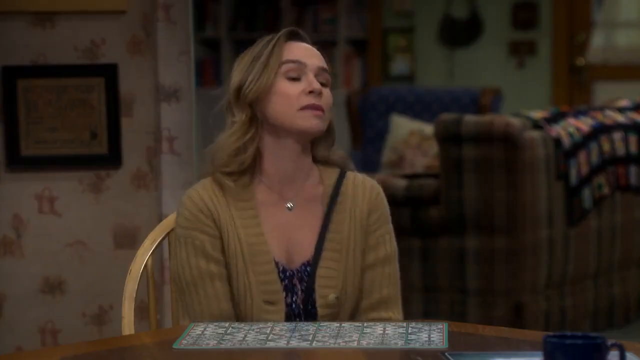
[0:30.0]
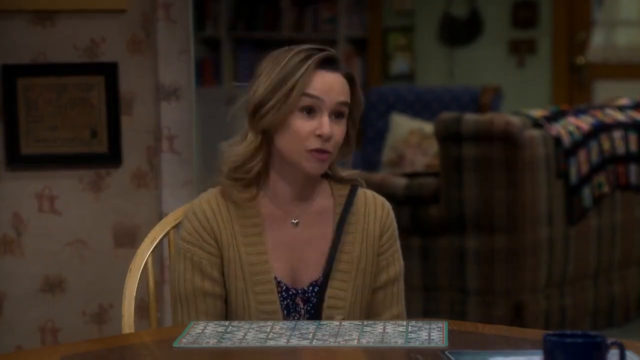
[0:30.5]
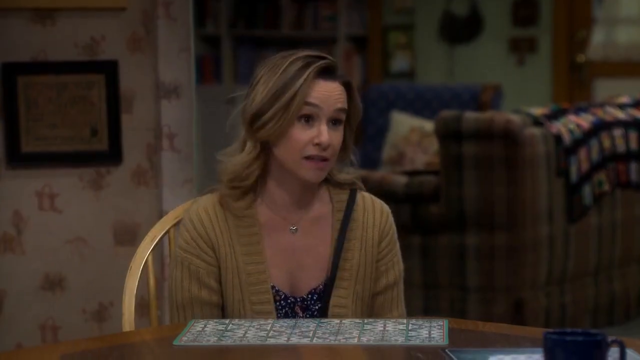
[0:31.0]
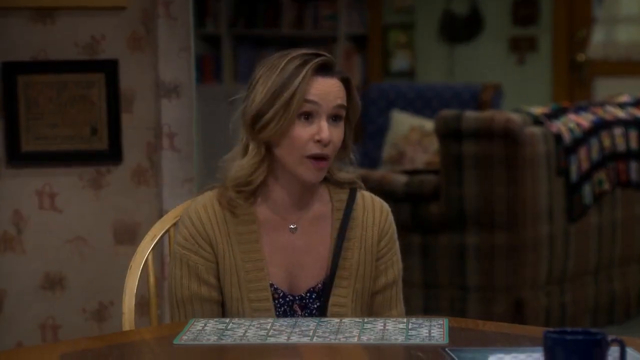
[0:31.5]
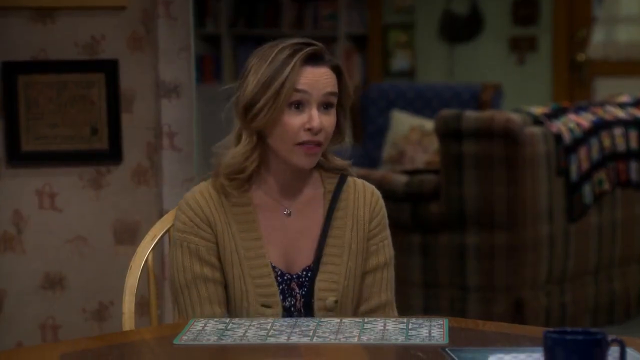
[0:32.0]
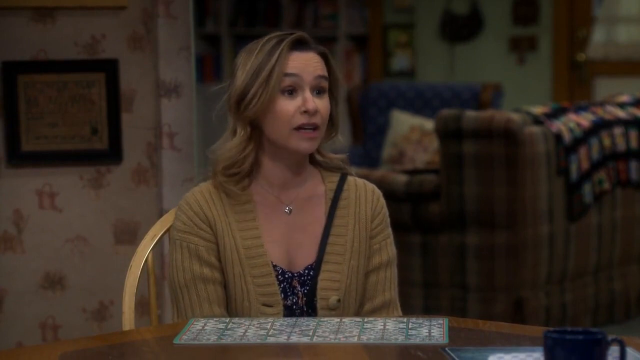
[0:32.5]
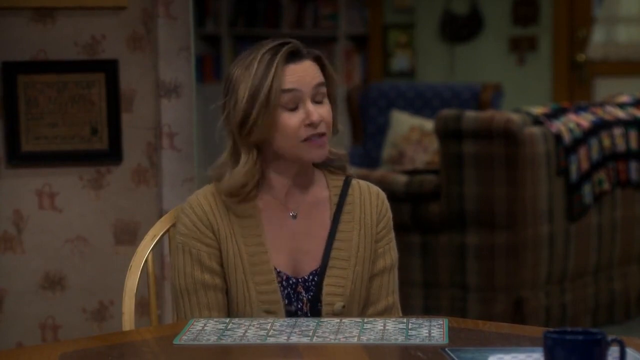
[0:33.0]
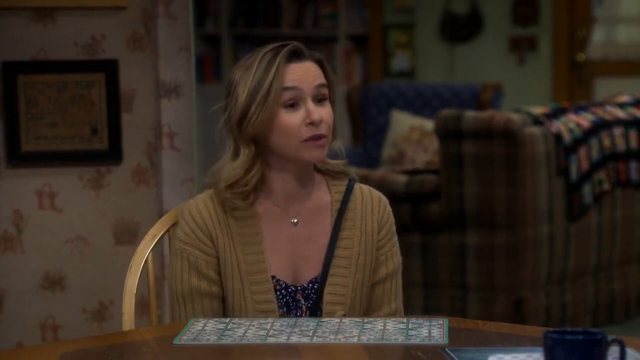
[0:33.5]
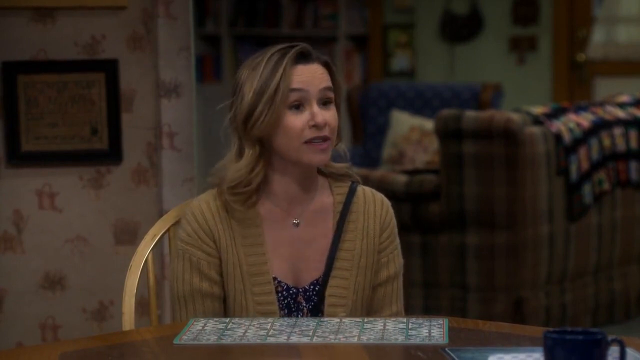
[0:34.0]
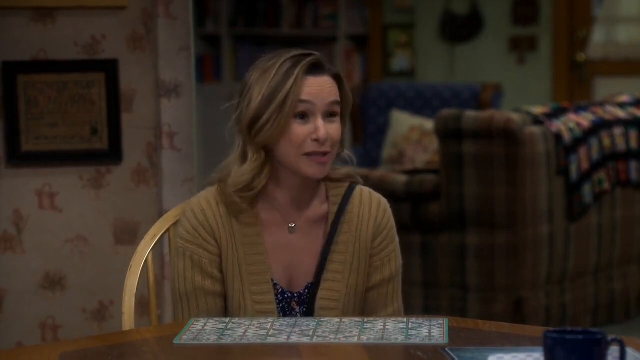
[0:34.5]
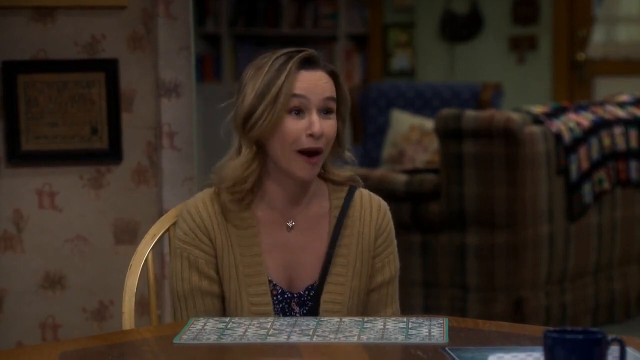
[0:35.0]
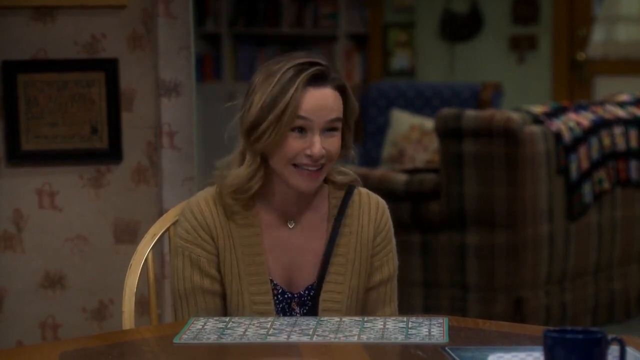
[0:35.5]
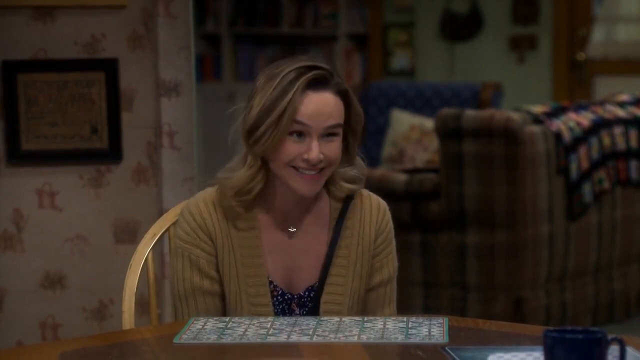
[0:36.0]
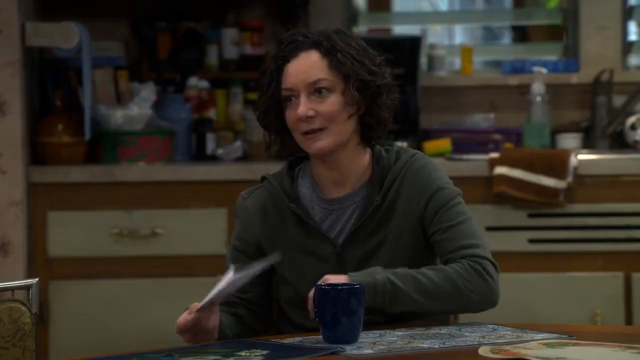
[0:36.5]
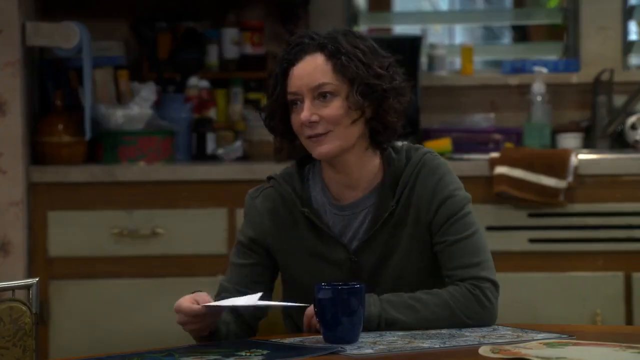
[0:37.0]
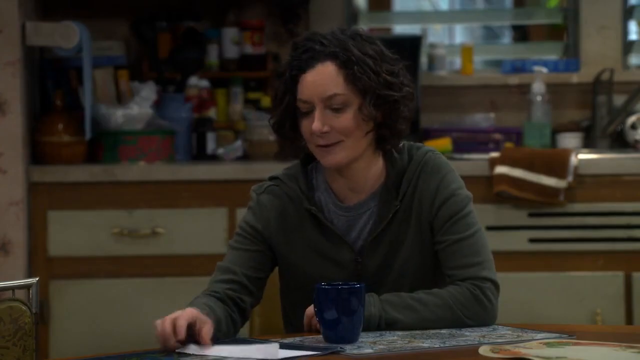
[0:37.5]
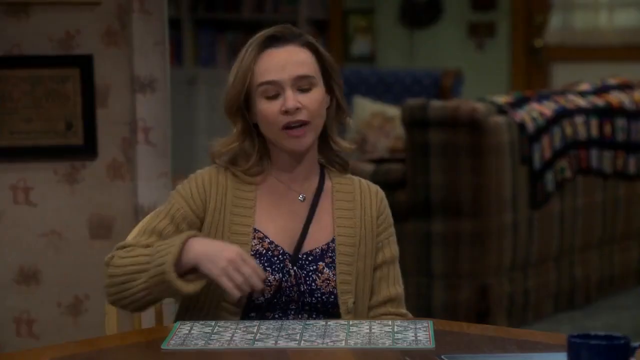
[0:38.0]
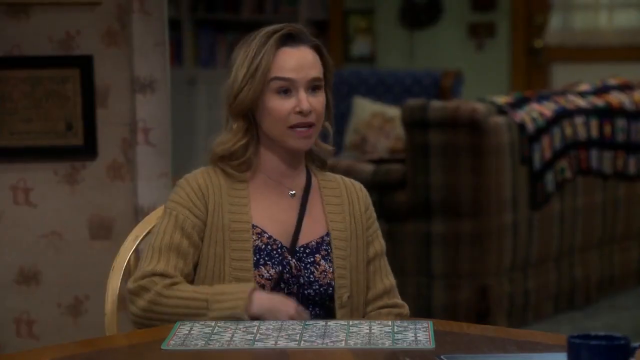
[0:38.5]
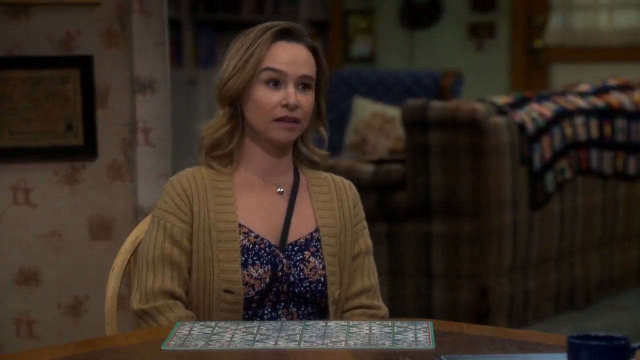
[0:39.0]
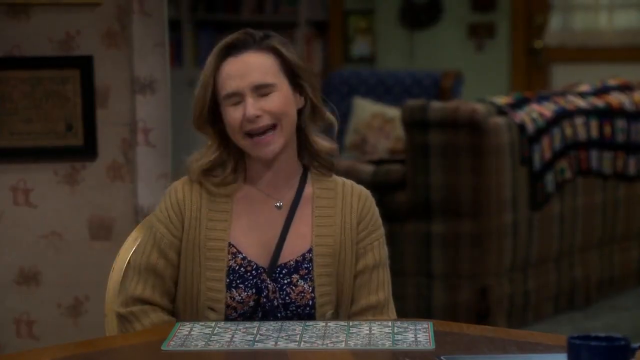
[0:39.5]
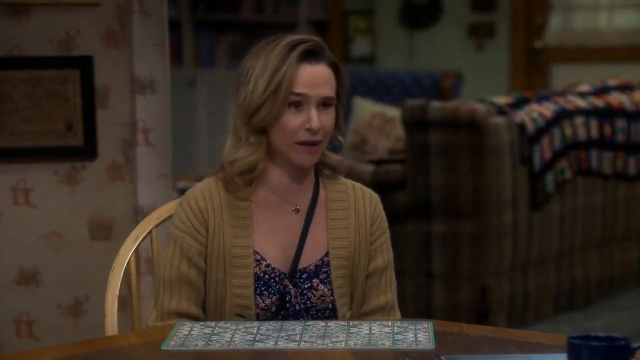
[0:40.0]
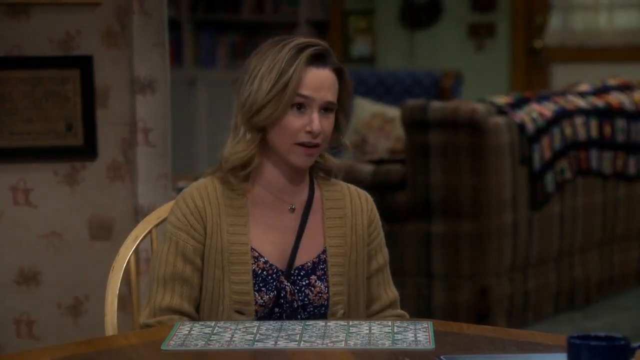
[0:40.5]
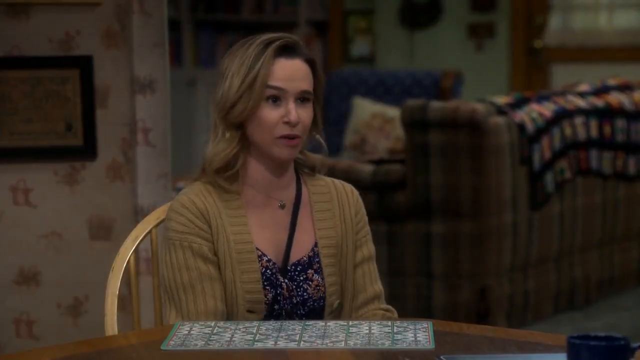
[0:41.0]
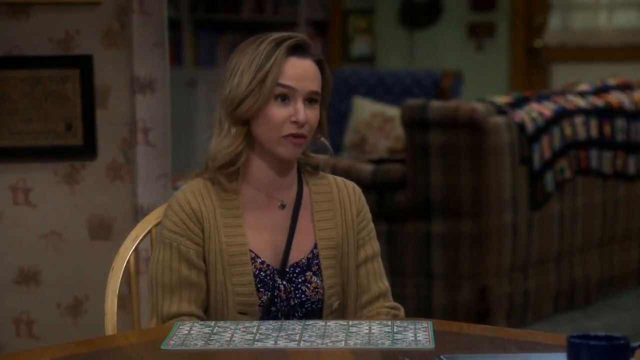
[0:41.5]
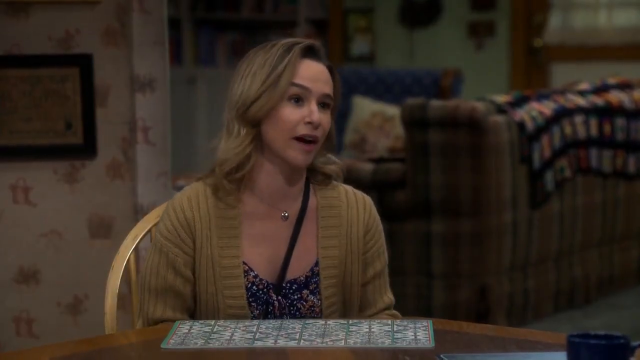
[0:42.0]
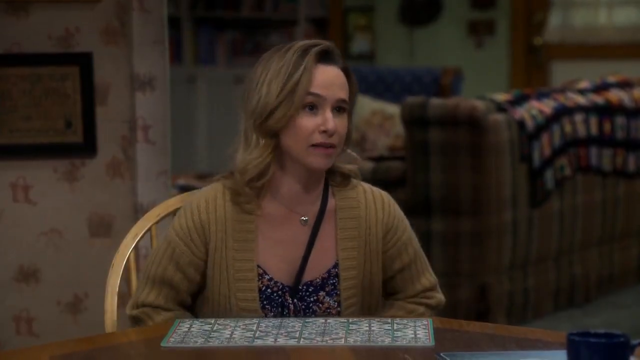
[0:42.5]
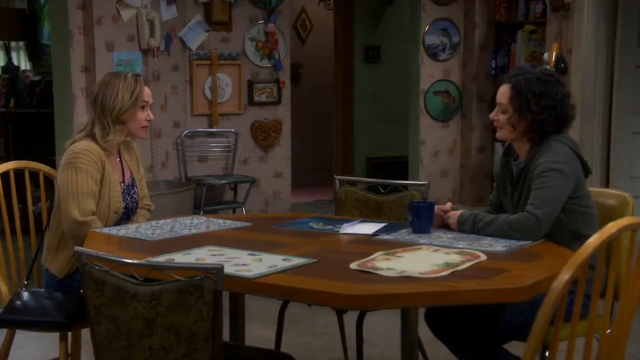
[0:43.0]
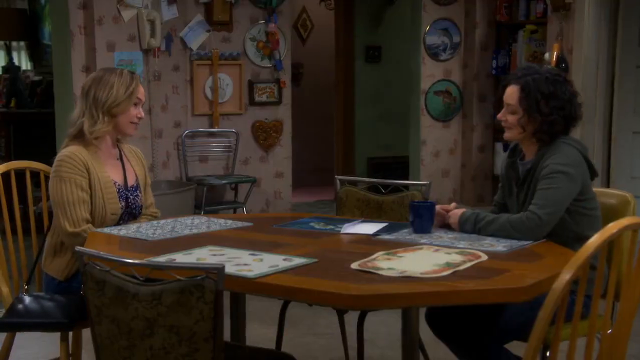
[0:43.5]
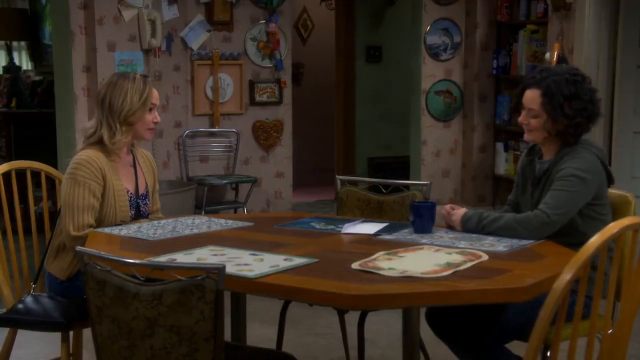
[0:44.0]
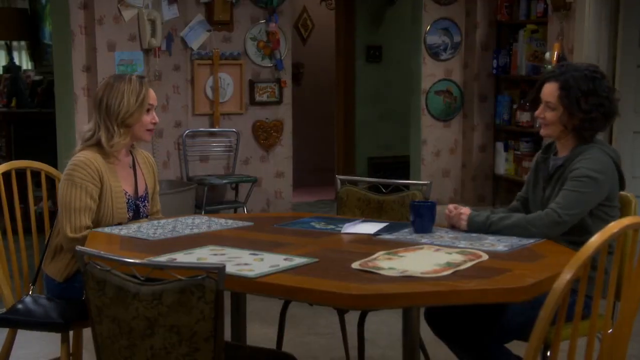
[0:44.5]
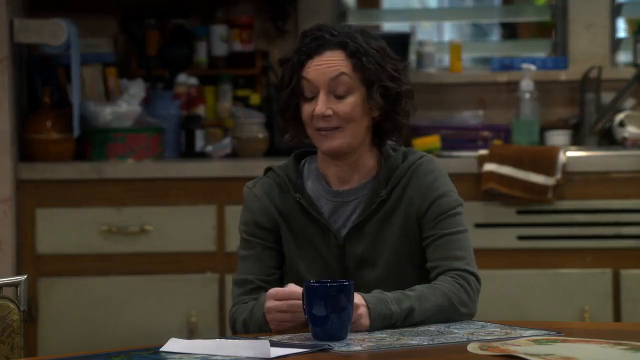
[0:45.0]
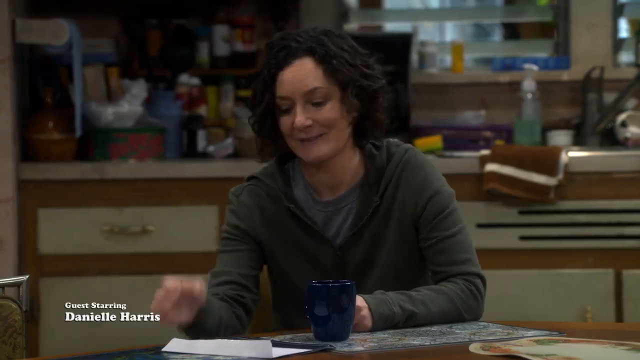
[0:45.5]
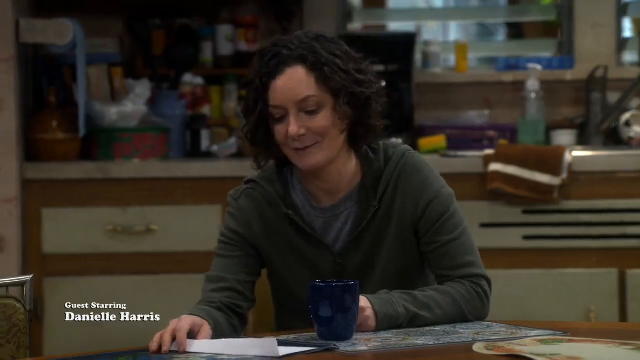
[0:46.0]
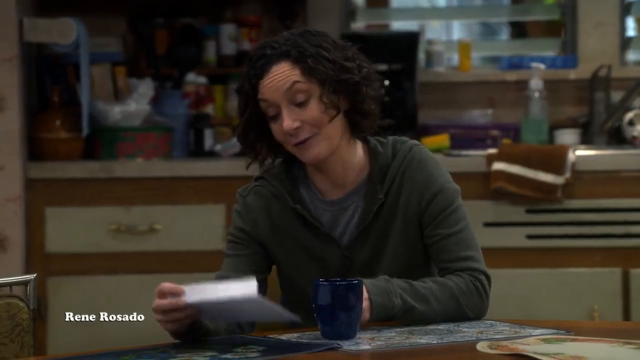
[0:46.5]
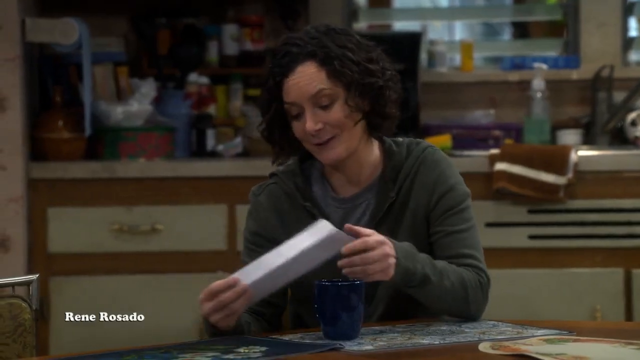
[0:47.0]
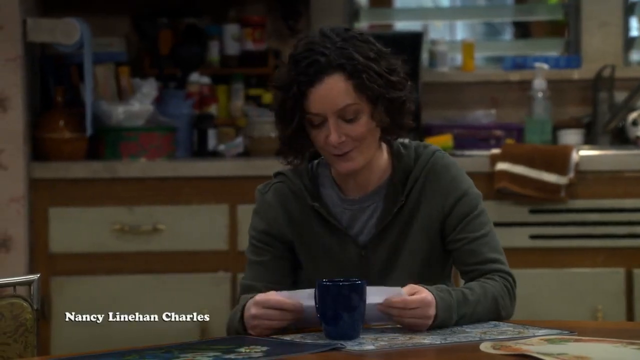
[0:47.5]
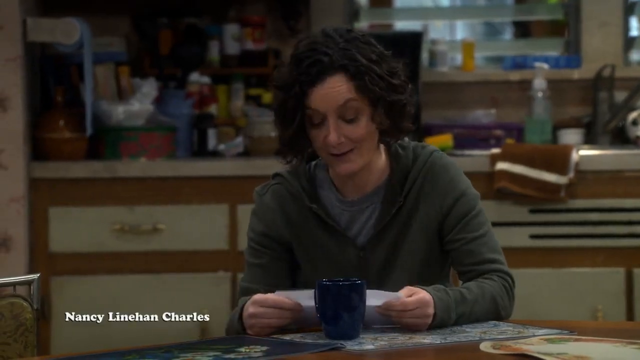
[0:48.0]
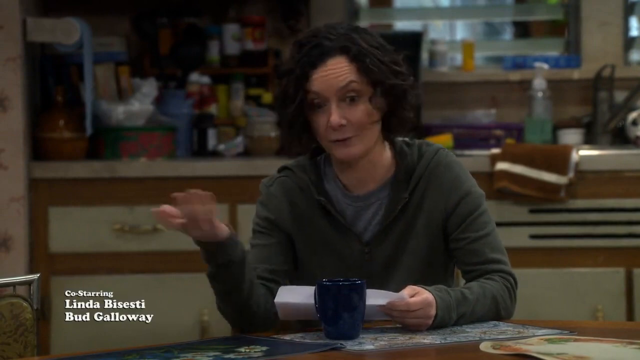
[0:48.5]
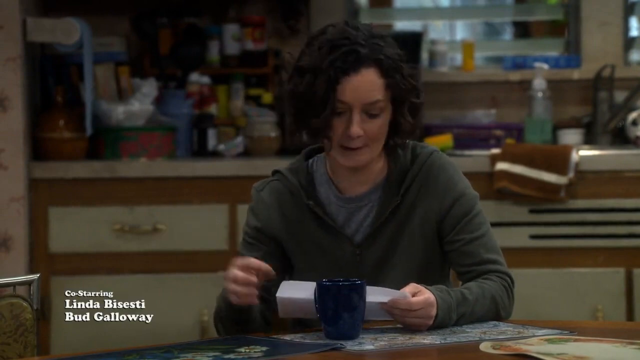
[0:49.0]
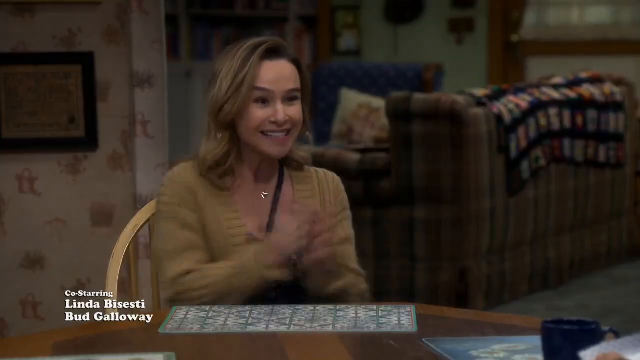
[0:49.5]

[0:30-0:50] In the kitchen, the two women continue their conversation. The woman in the light brown jacket wears it unbuttoned, revealing a dark top underneath; she has a messenger bag with a black strap hanging across her shoulder, and her hair is light brown. Behind her there is a frame on the wall. She talks excitedly and smiles as she converses with the dark-haired woman in the dark olive t-shirt, who stares at the table while talking. The video zooms out to show an overview of the dining table: a dining mat is placed on the brown table, and behind there are lots of frames on the wall. The woman in the dark olive shirt grabs the white envelope once again from the dining table and holds it with both hands, her hands resting on the table. At the bottom left of the screen, white text appears that says "Nancy Linehan Charles". The woman in the dark olive t-shirt waves her right hand, and the woman in the light brown jacket claps her hands and stands up from the dining chair.